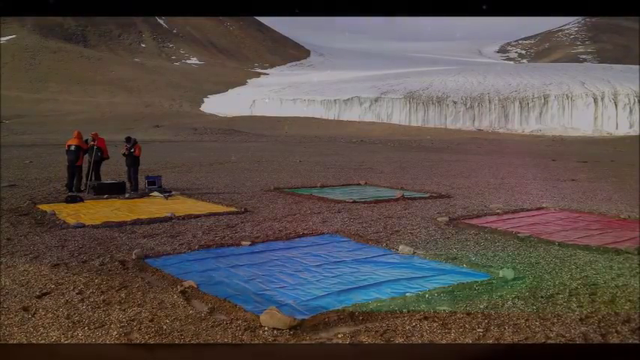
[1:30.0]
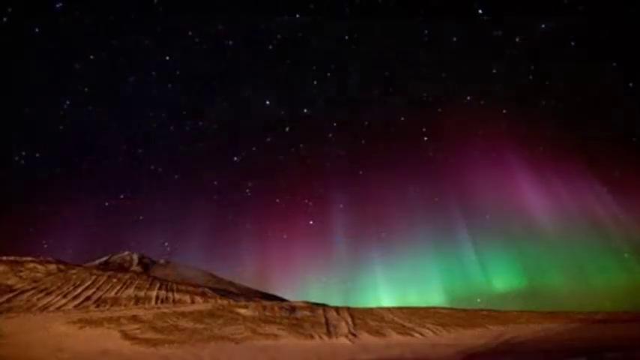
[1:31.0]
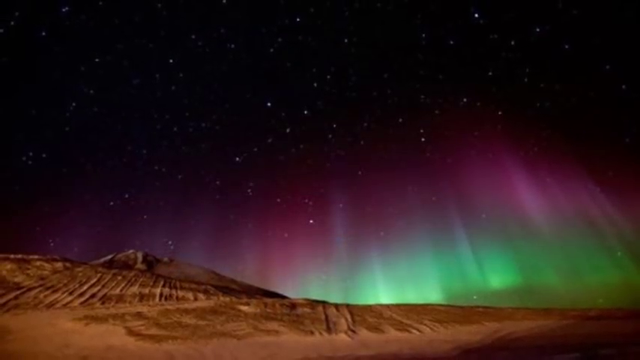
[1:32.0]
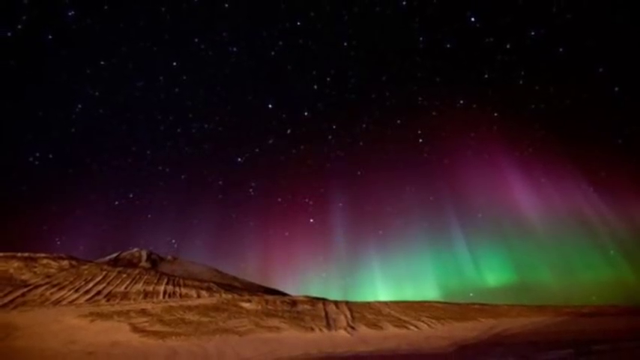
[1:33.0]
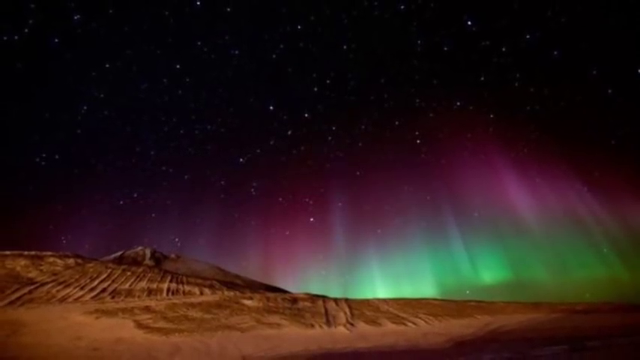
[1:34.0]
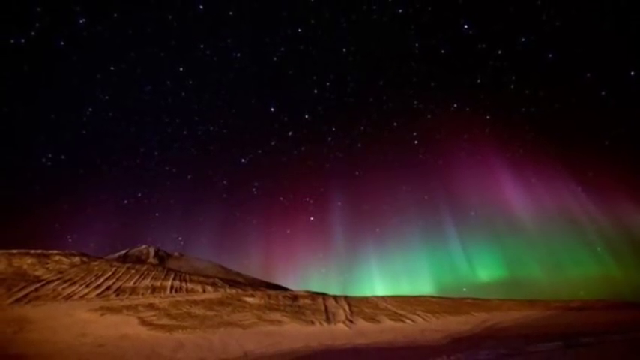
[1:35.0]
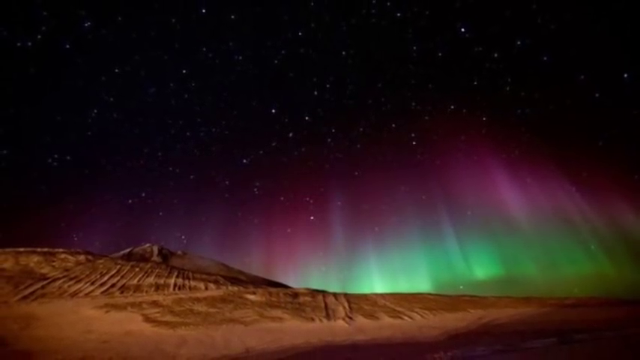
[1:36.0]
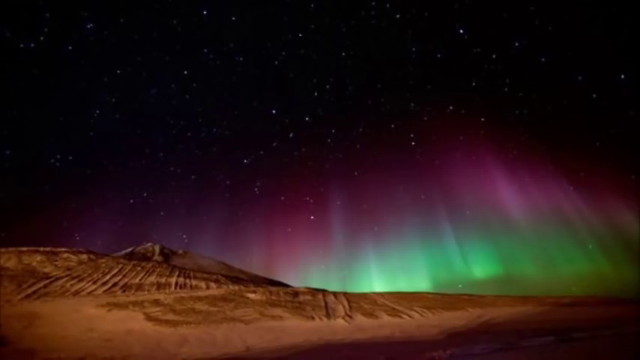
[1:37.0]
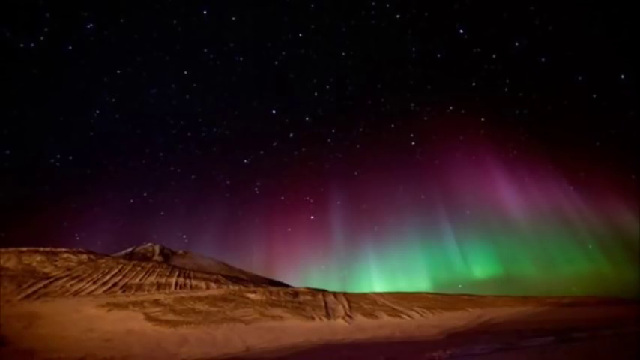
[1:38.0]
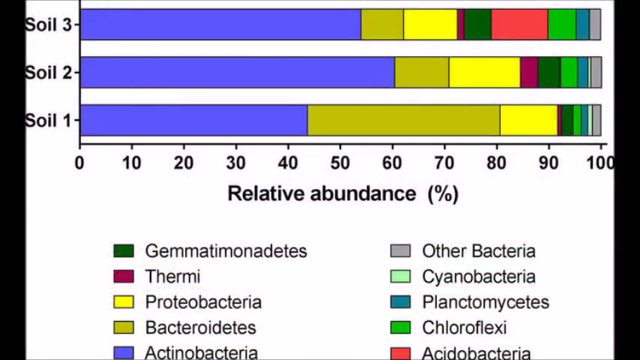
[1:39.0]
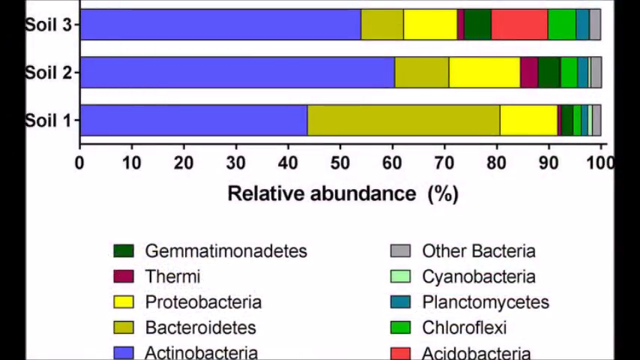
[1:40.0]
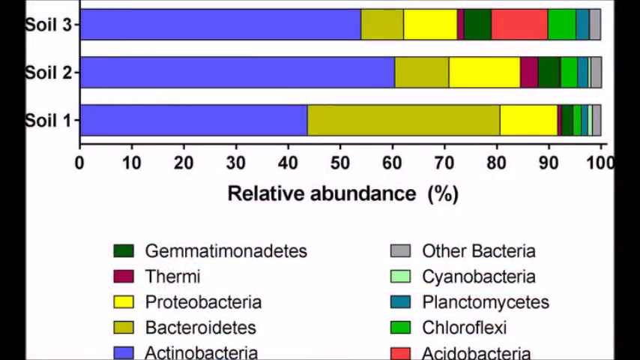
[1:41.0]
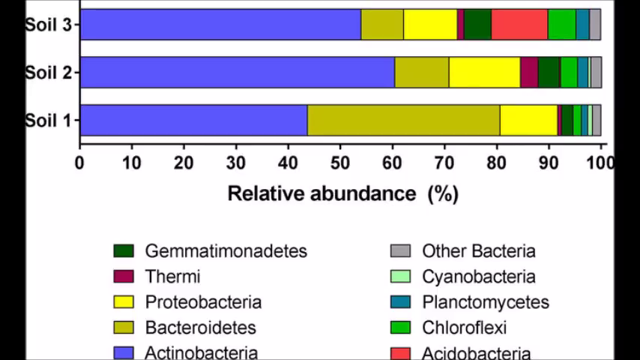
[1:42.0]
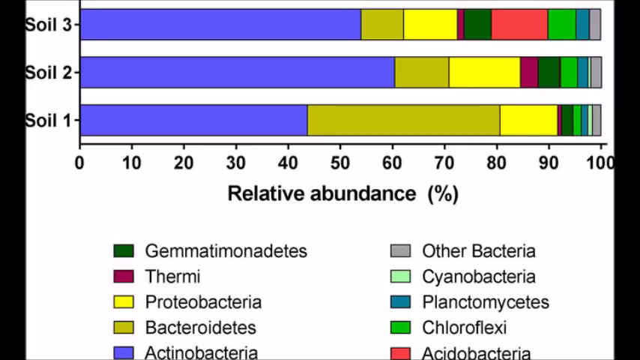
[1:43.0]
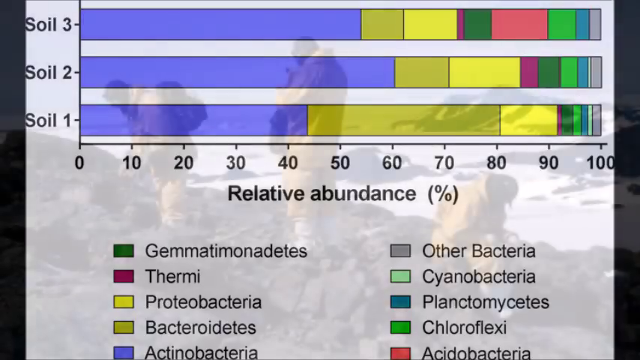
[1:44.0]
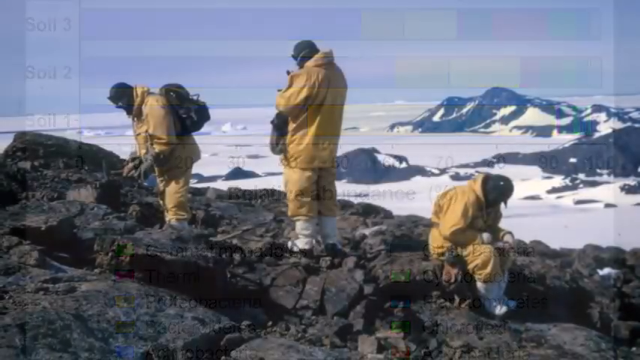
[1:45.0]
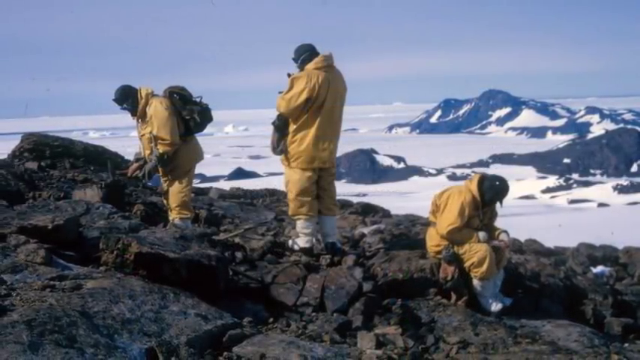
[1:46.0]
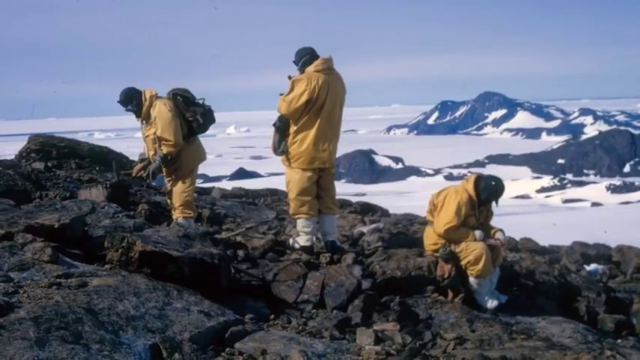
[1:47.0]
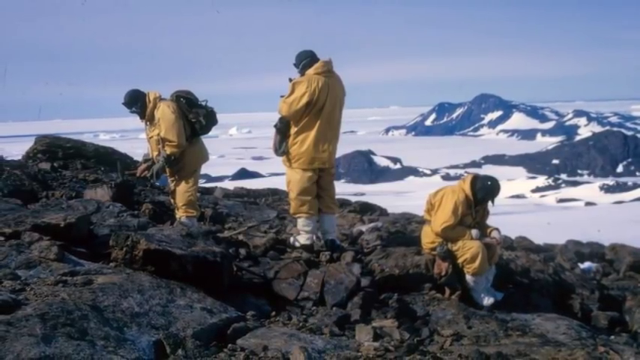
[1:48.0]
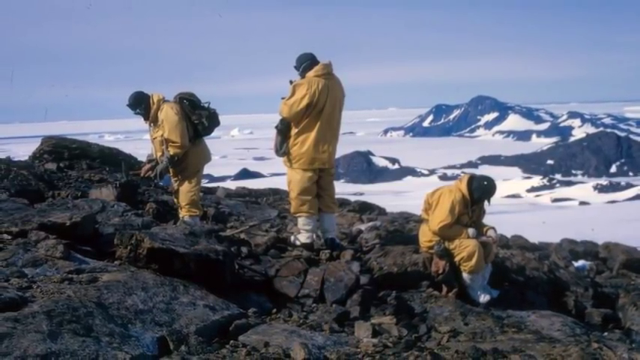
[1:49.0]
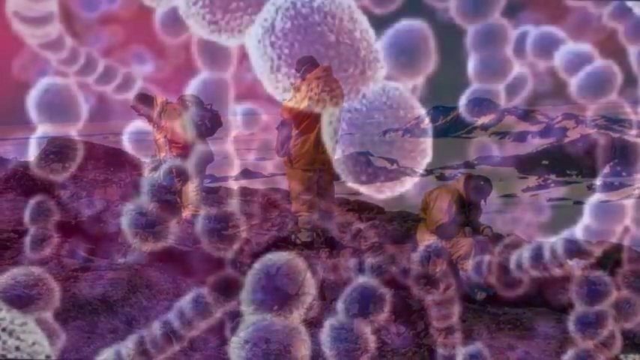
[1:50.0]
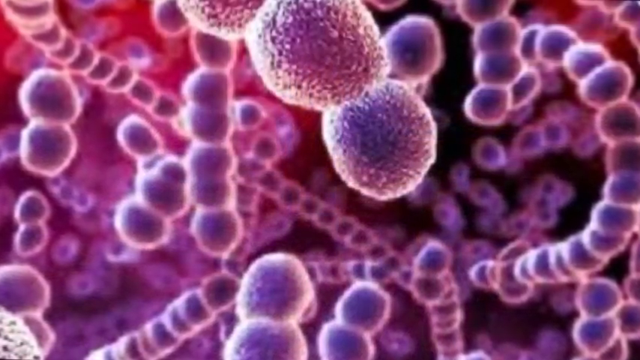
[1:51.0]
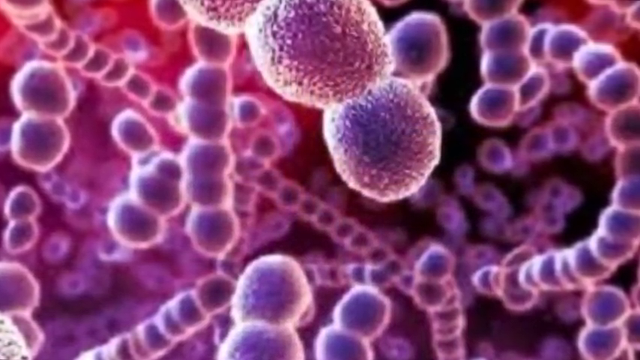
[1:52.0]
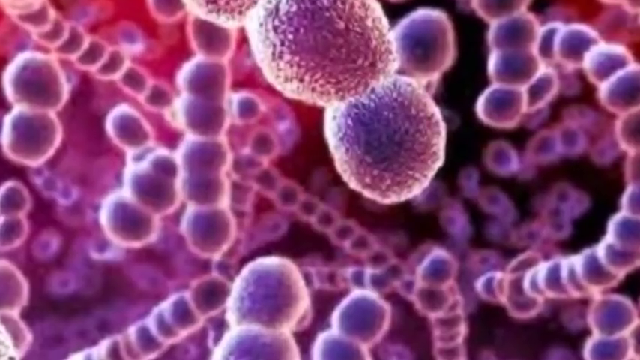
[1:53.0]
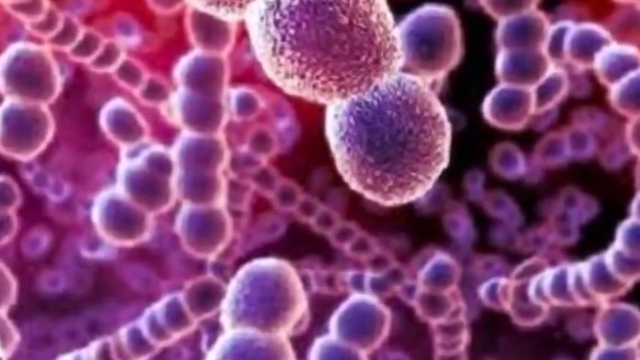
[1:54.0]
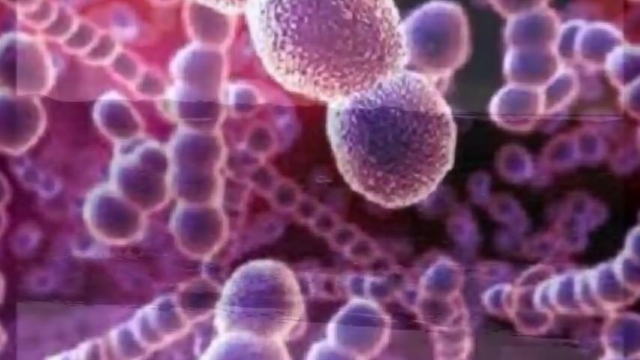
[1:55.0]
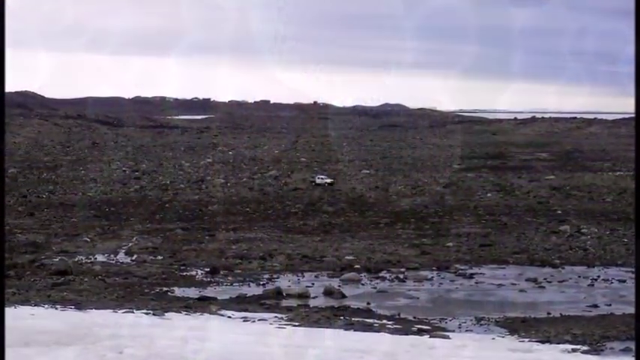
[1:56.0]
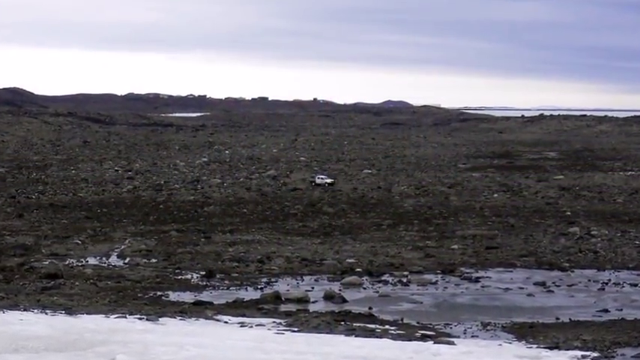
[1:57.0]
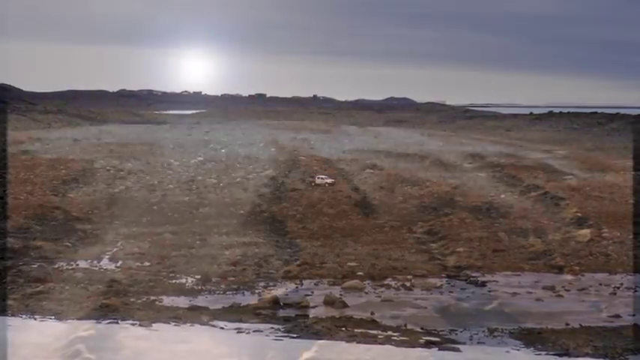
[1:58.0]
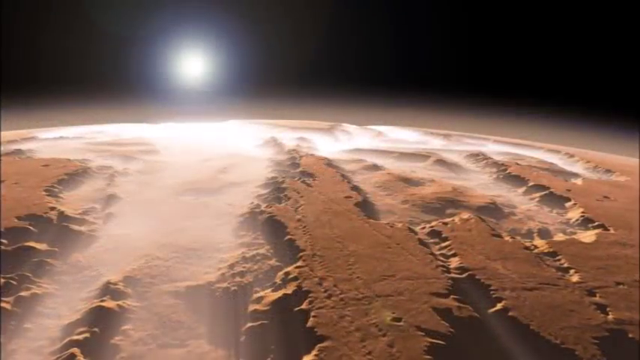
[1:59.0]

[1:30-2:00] A picture of the sky shows three colors, pink, blue and green, with many brightly shining stars and brown ground below. A graph follows showing soil 1, soil 2 and soil 3 against relative abundance in percent, with colored bars and a legend of bacterial groups including "Cyanobacteria." Researchers in yellow shirts and yellow pants then do research on the stones and rocks of a mountain in Antarctica. Bacteria are shown in a microscope view, followed by a field and a sky view of a planet.